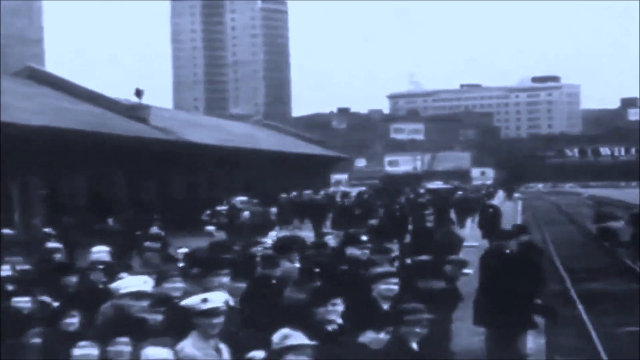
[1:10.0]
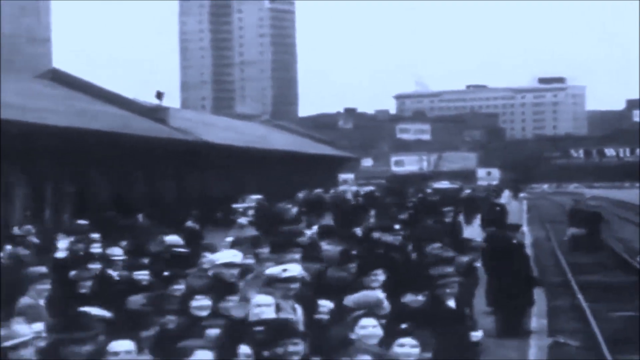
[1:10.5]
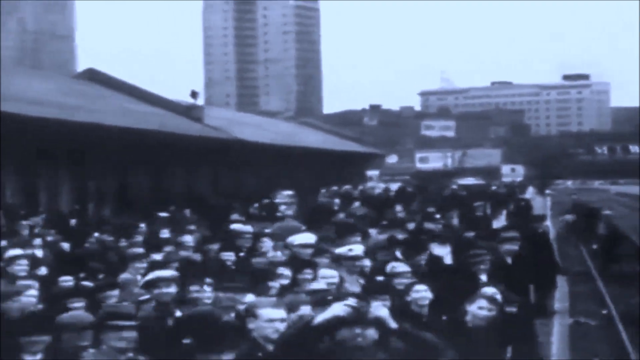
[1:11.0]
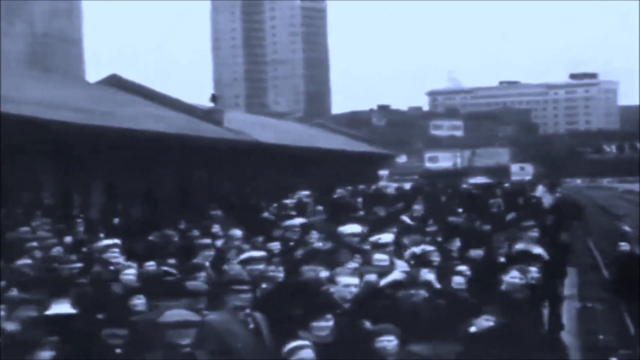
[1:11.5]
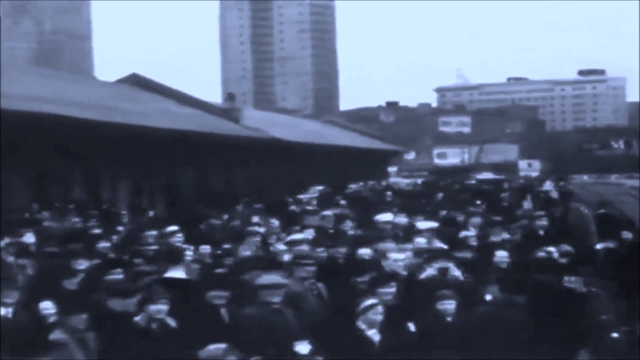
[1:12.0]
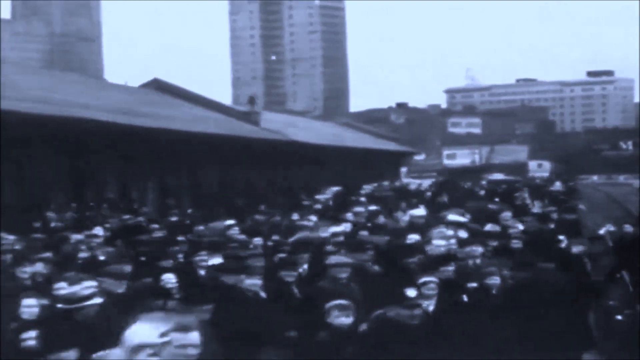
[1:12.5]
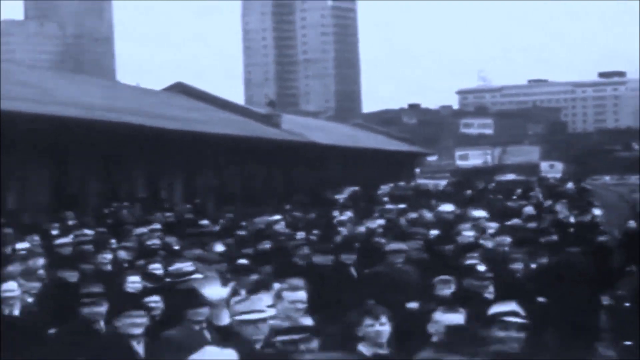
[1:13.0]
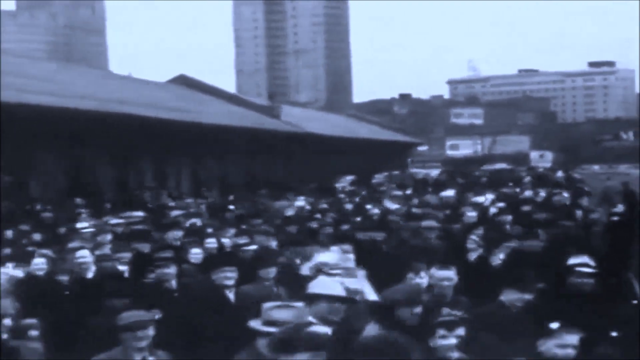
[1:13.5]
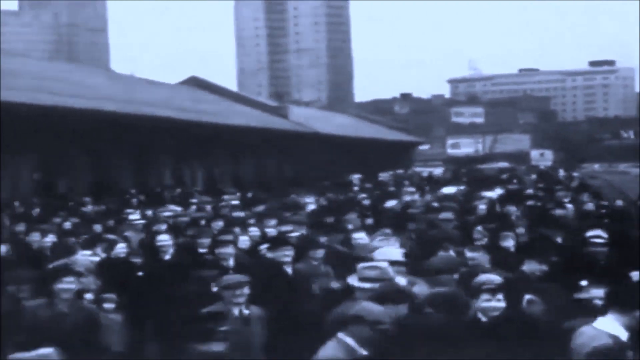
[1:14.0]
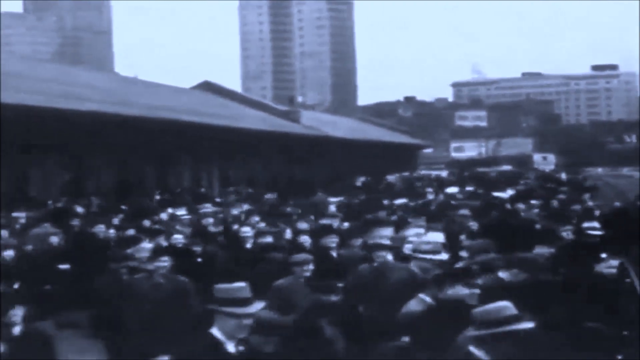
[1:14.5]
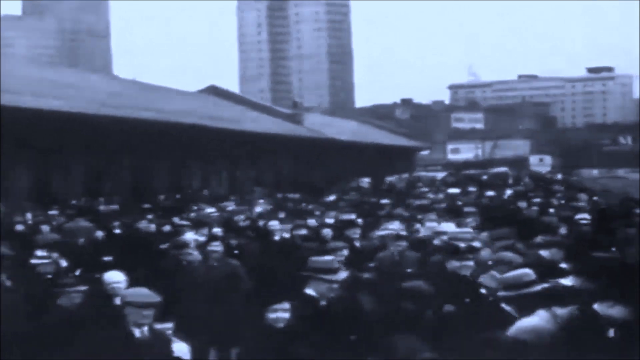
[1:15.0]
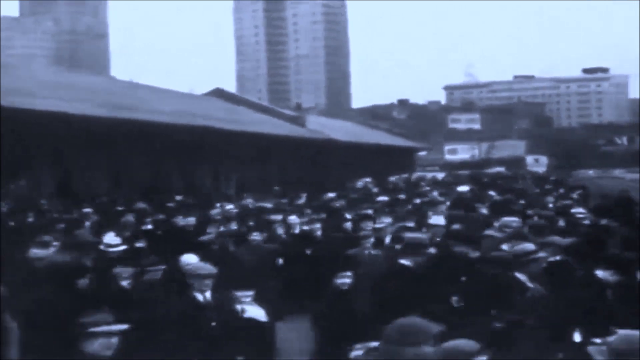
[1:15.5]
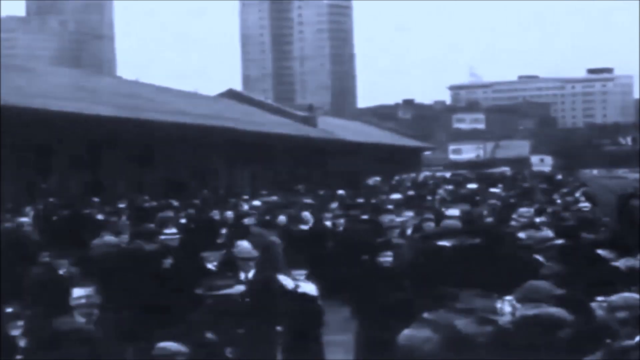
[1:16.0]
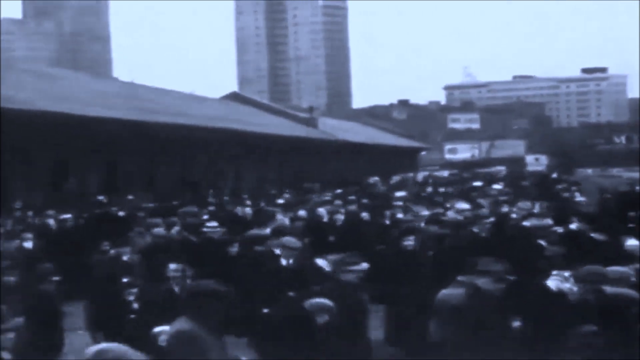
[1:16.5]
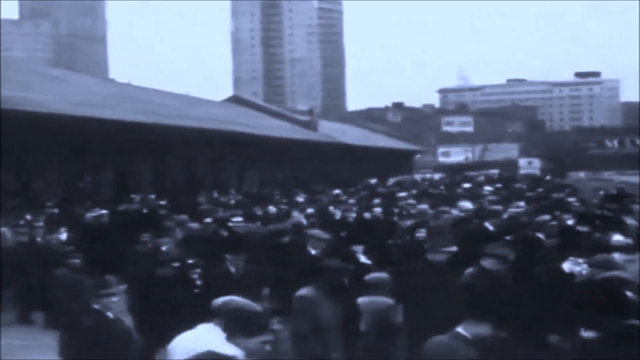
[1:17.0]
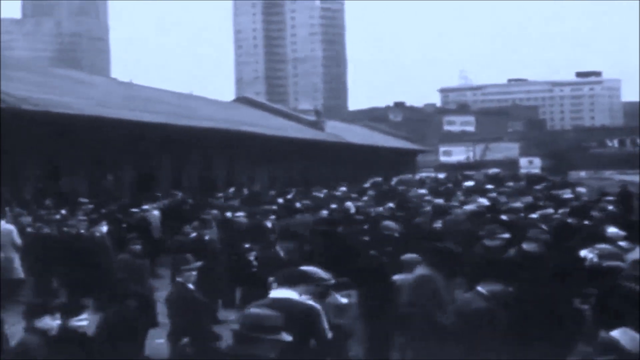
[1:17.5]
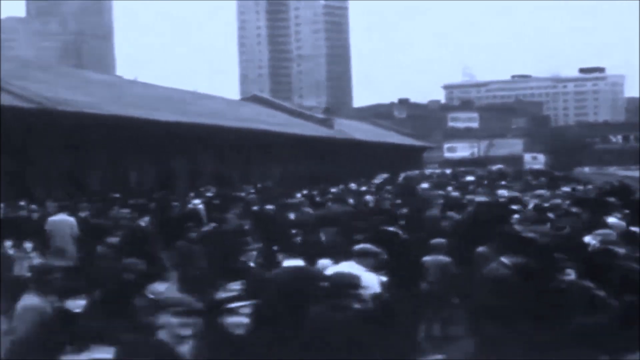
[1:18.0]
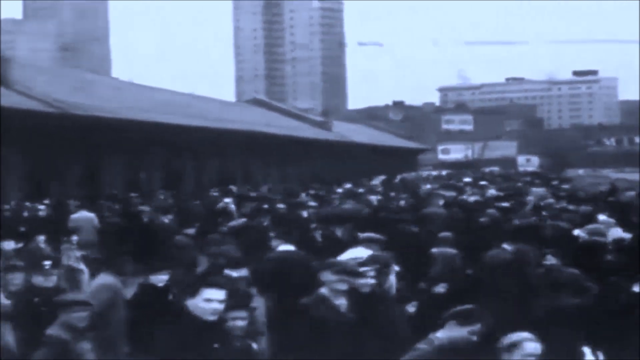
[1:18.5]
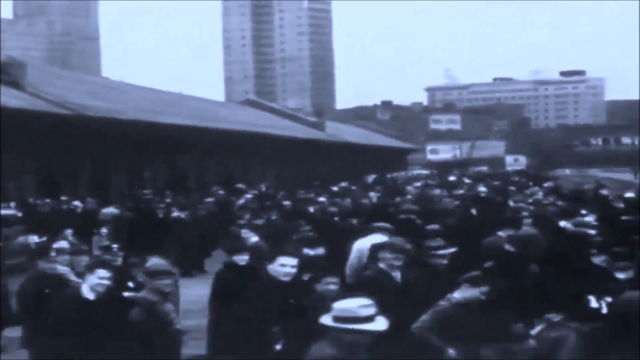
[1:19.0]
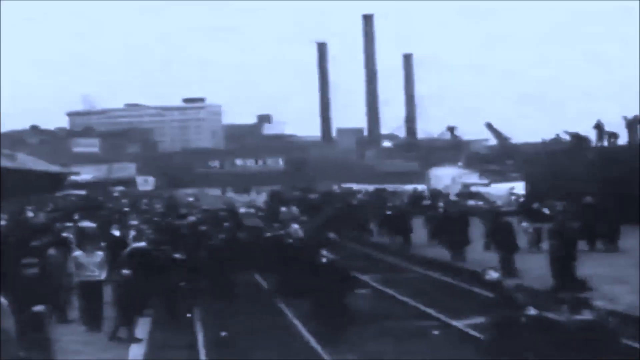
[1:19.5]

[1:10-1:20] Buildings stand in the background, and in the forefront is apparently a train station: a building right next to the railroad track with a large platform. A large group of people is on the platform, mostly men, possibly with some women. Many wear fedora hats and some wear flat hats; almost everyone has a hat, though some men do not. There also seem to be some naval personnel wearing hats that resemble Donald Duck's. The camera moves backwards from the scene, almost as though taking the perspective of the train, revealing more and more of the platform and the crowd, who all wave toward the camera as though sending the train off.